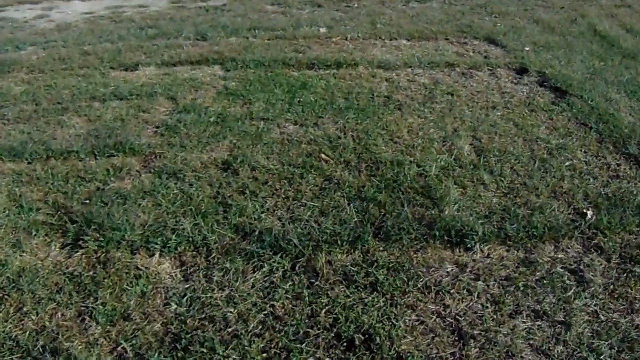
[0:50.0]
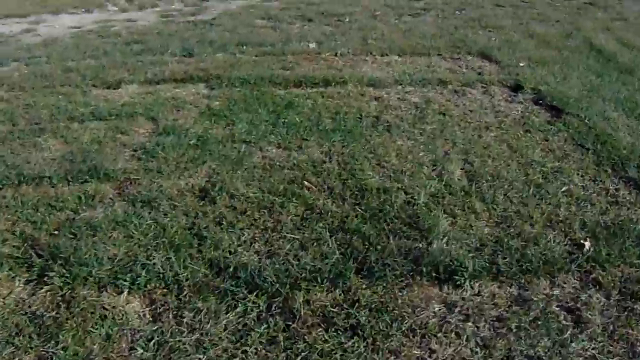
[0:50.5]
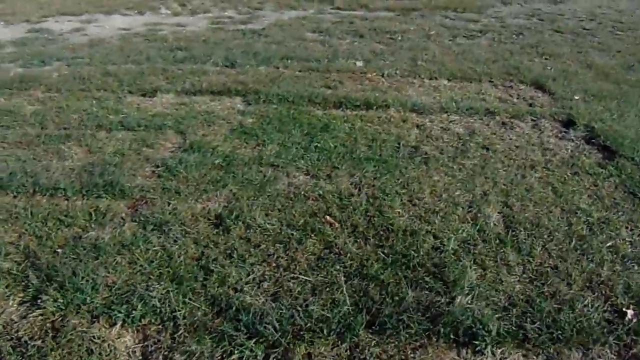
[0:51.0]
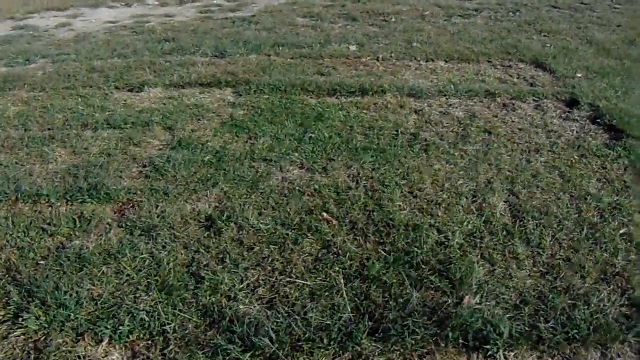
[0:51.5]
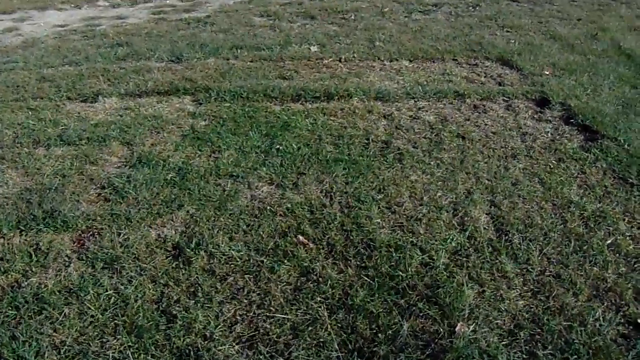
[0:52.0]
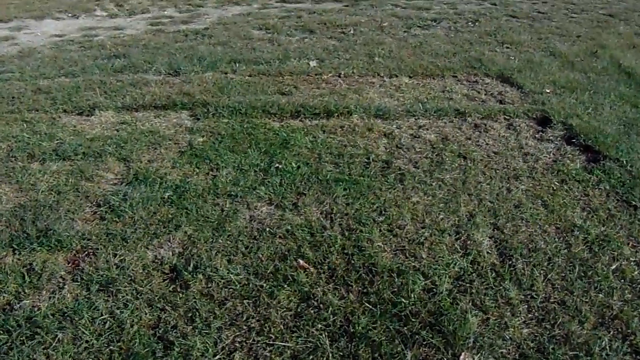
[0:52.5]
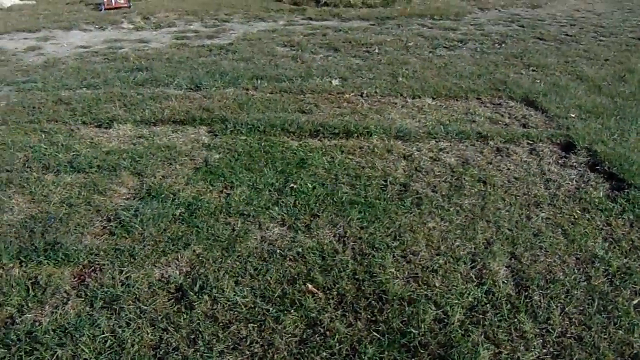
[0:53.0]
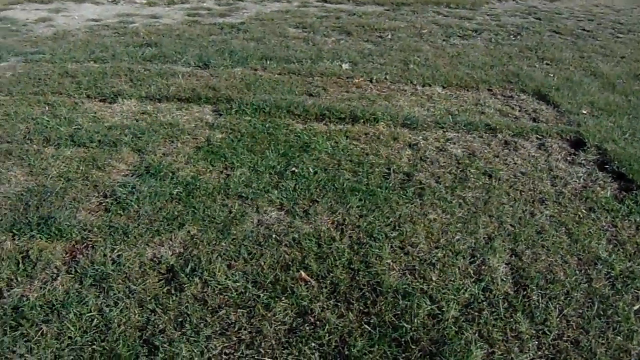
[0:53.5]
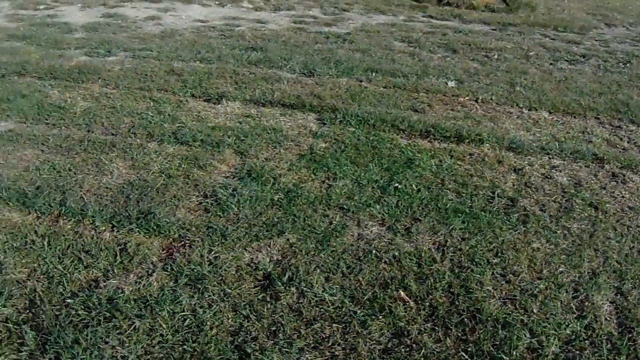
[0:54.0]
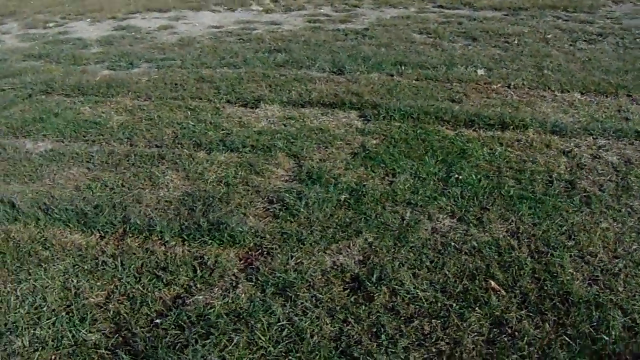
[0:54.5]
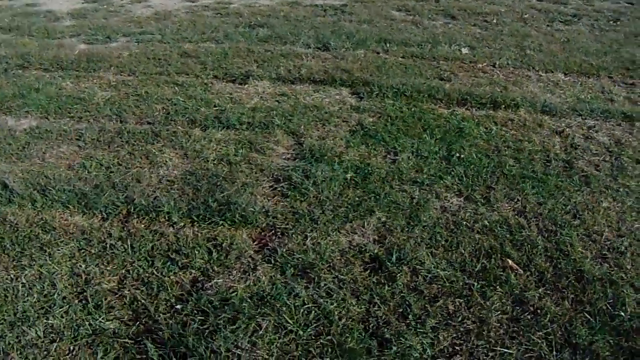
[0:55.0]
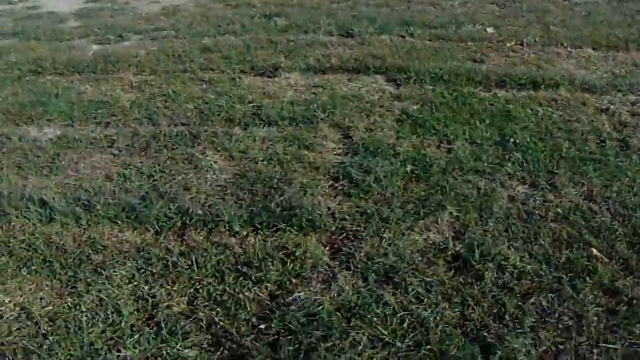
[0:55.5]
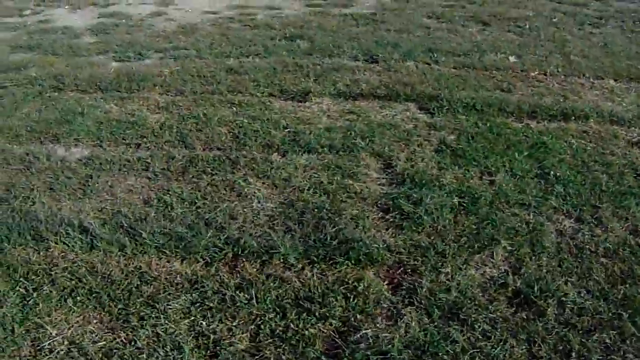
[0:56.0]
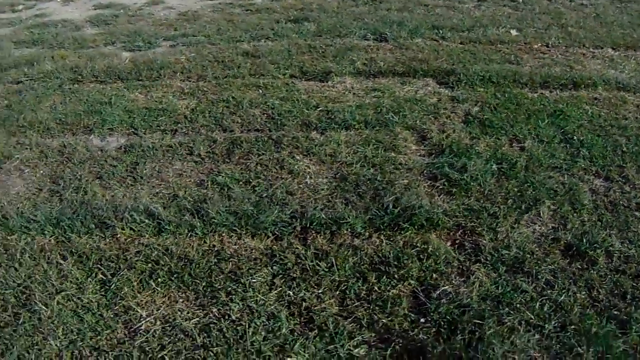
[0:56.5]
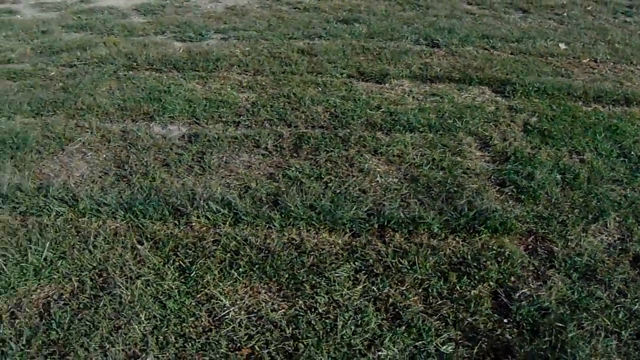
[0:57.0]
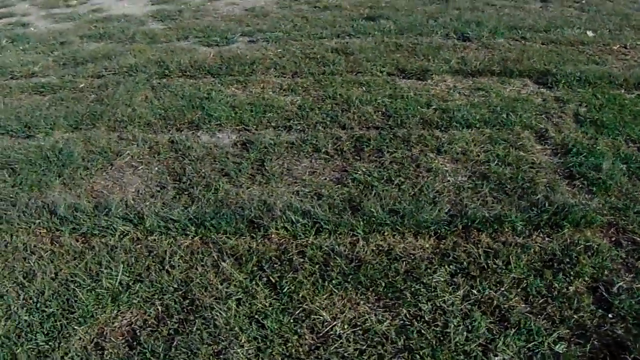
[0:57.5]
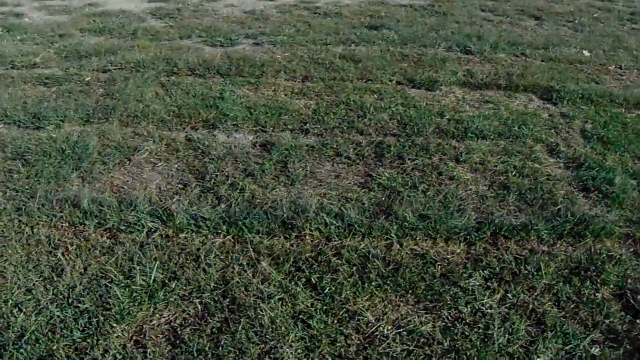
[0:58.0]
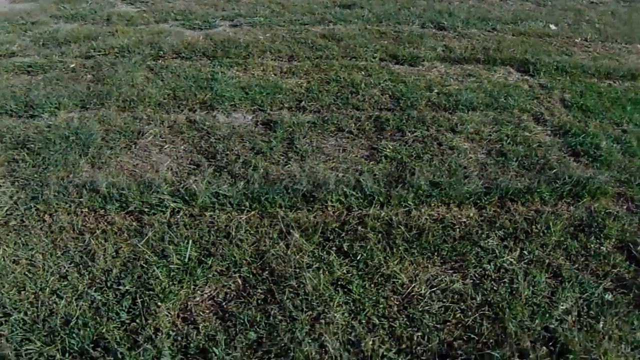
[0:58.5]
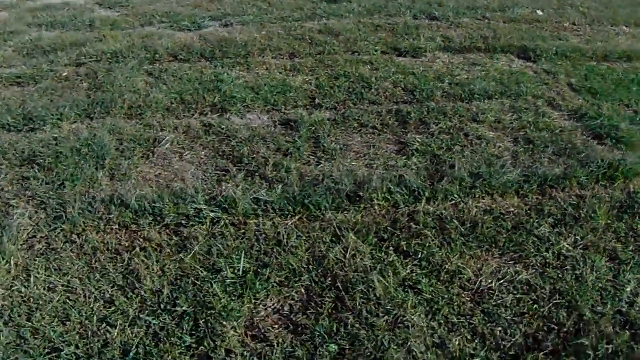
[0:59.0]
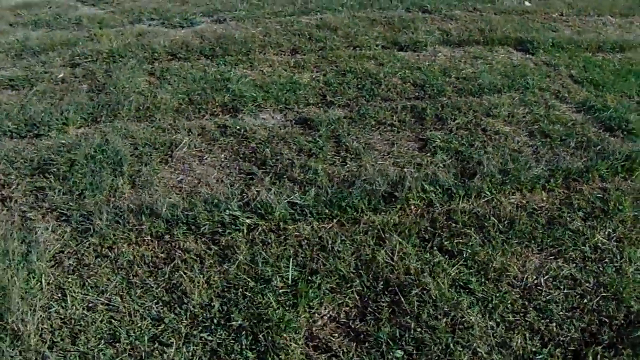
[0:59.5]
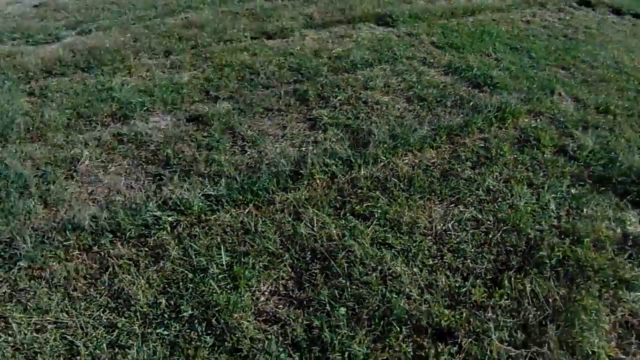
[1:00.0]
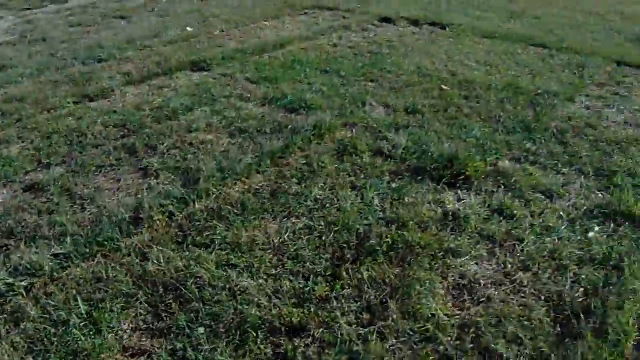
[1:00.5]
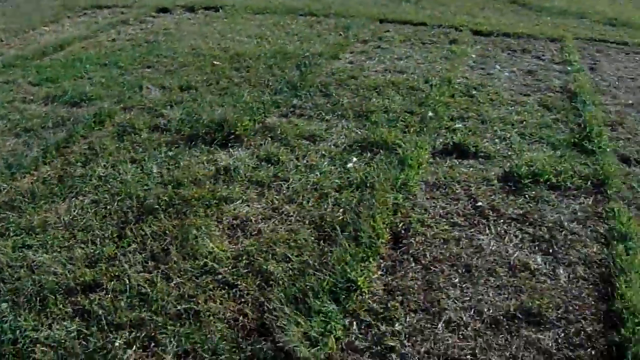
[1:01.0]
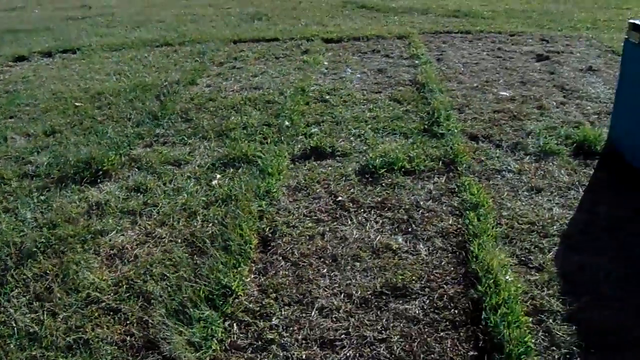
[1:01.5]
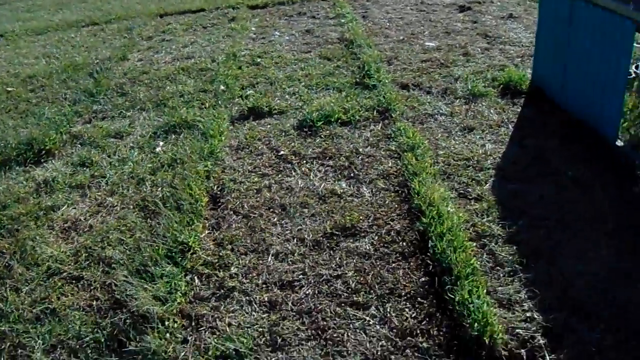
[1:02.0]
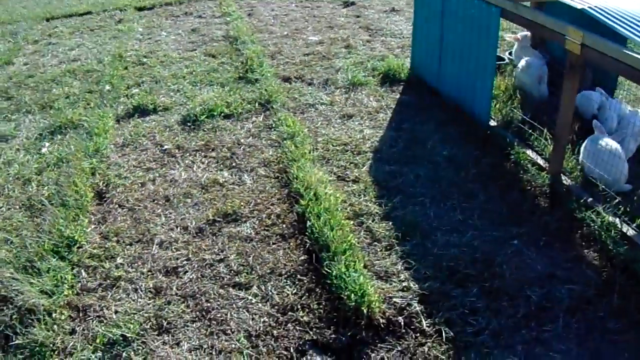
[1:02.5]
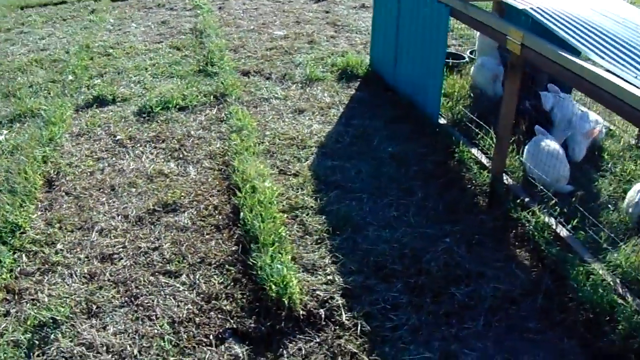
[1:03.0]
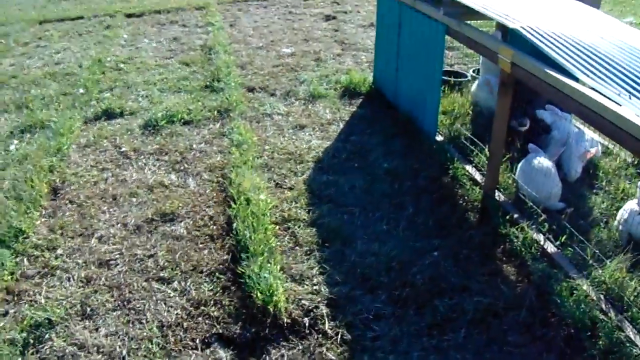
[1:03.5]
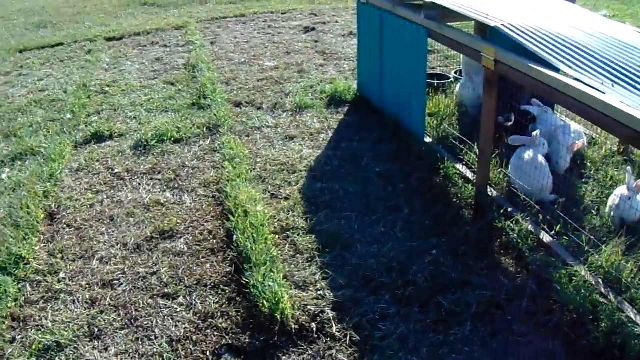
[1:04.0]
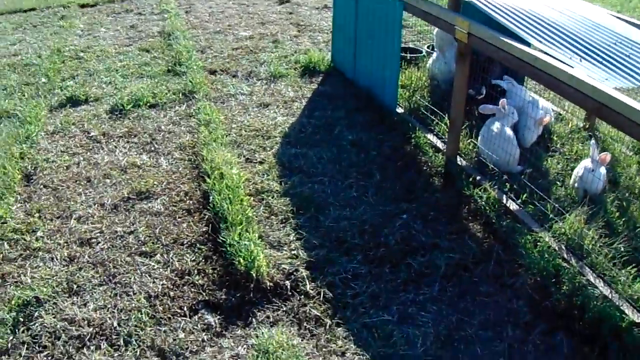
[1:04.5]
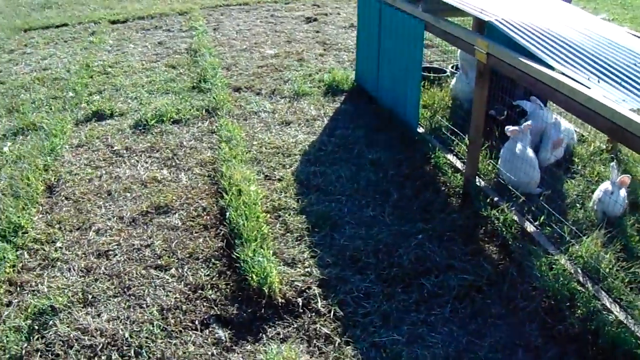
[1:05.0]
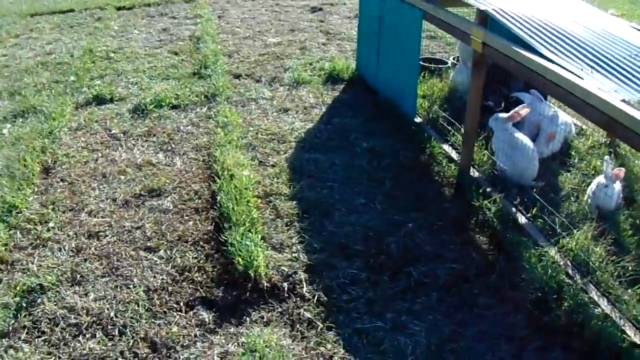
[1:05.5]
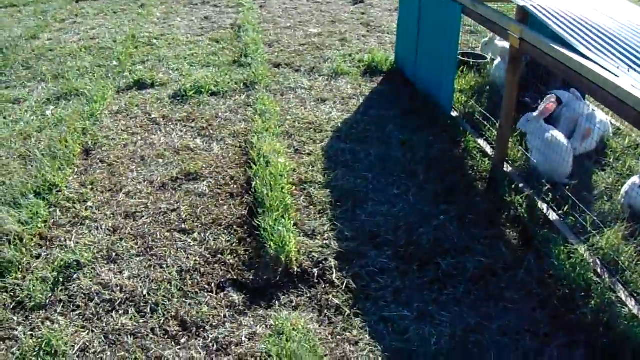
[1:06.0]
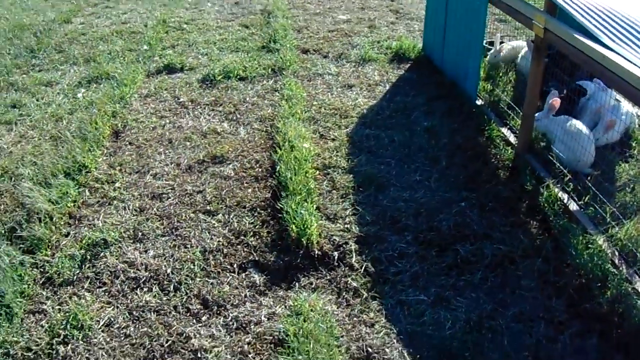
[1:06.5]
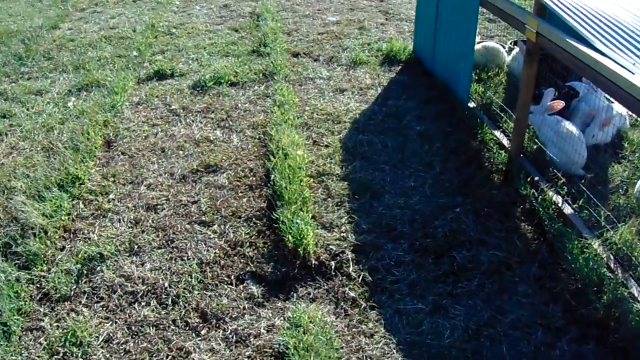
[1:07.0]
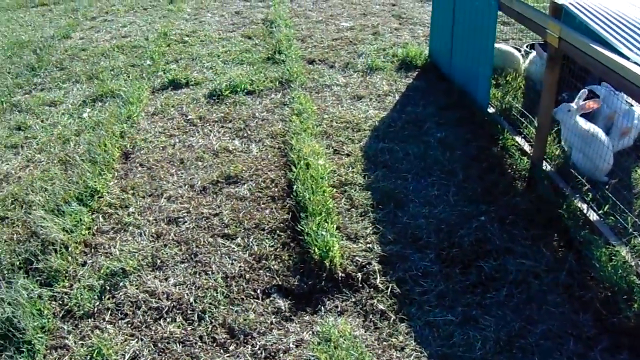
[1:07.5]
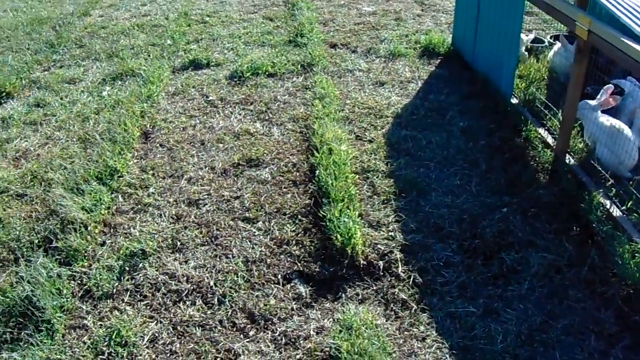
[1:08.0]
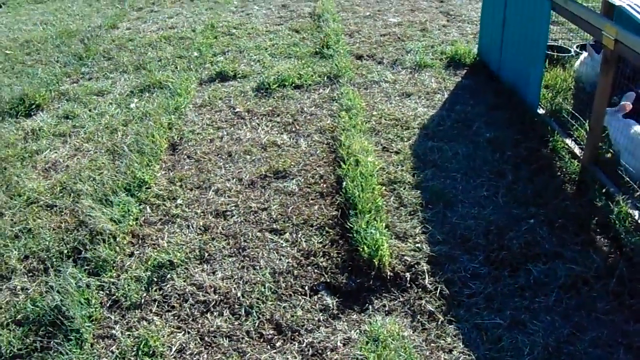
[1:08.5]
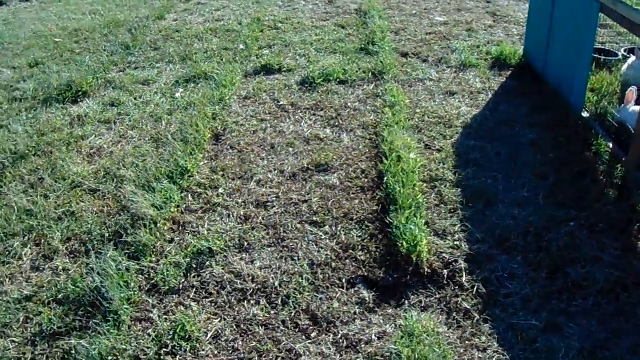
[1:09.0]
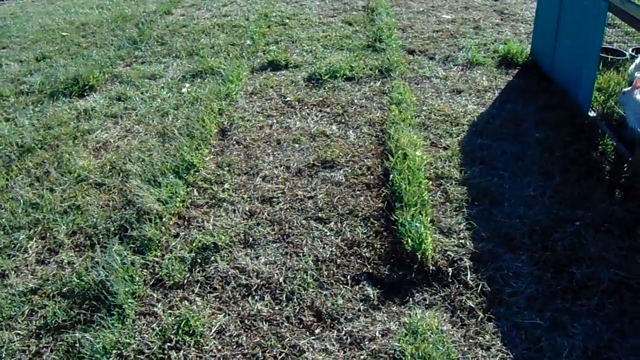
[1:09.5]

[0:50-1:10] The shot shows a green-brown meadow as the person filming moves across the field; the shot is not stable. In the background, patches of ground without grass, which appear very light in color, are visible for a few moments. At the end, the camera turns to the right, and on the right side of the frame a wooden and metal structure appears, with very small white rabbits inside jumping here and there on the grass. The cage is made of wooden pieces with golden metal parts where two perpendicular wooden beams meet, and shiny metal panels.